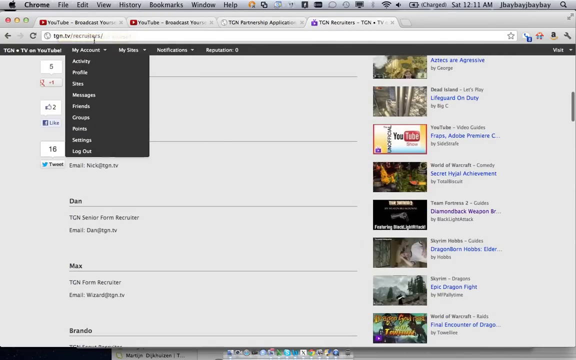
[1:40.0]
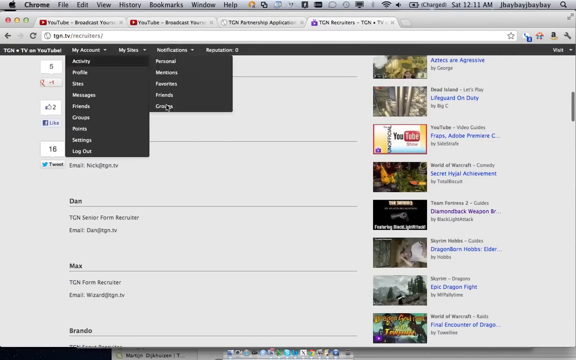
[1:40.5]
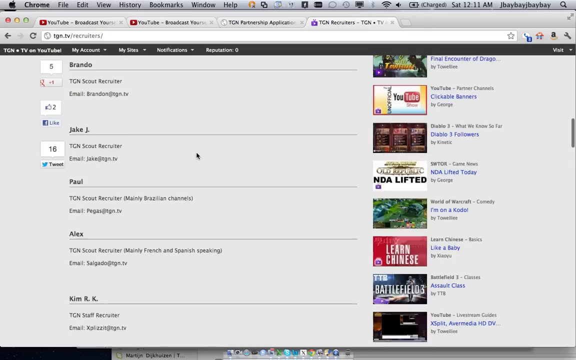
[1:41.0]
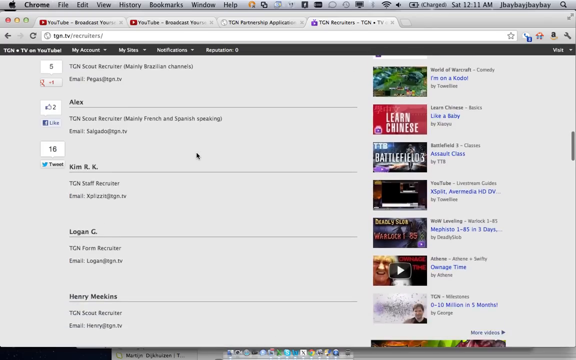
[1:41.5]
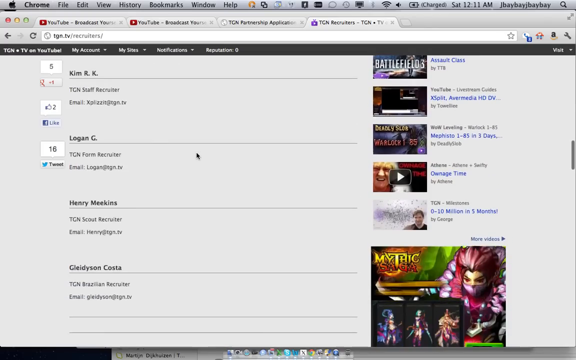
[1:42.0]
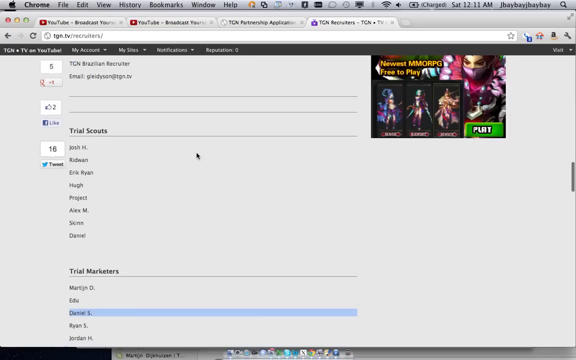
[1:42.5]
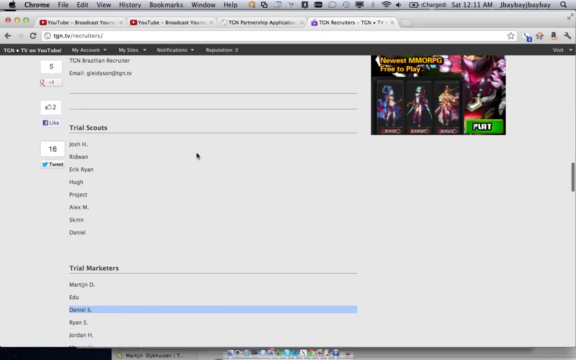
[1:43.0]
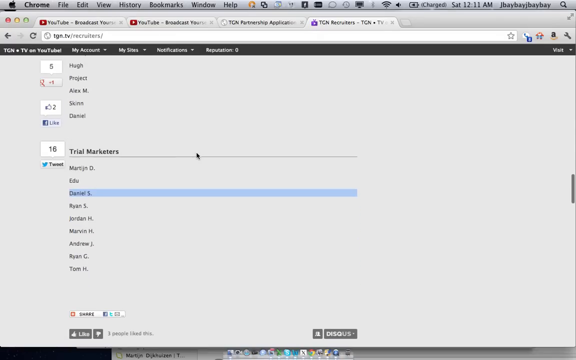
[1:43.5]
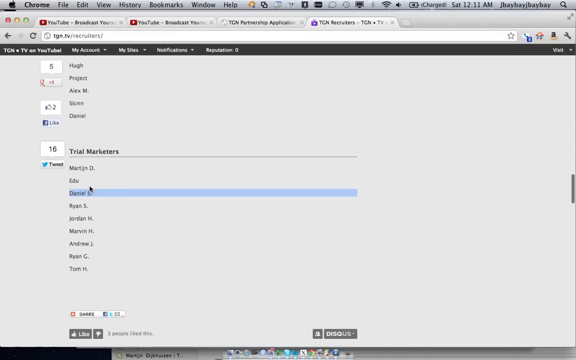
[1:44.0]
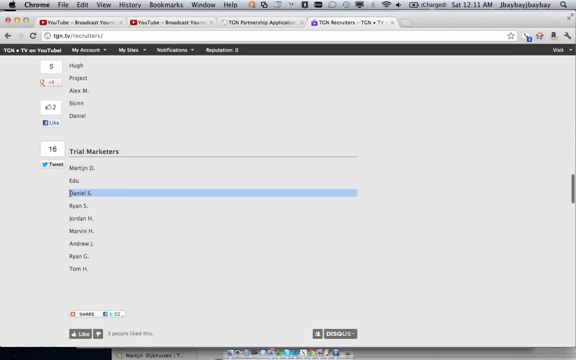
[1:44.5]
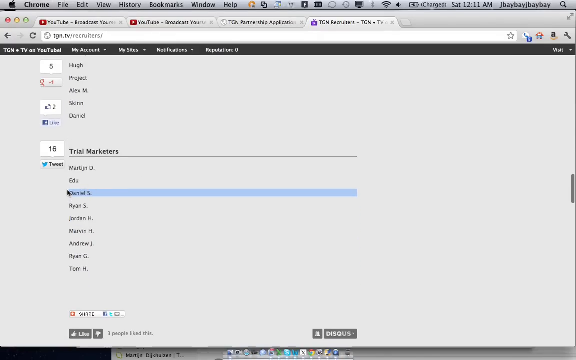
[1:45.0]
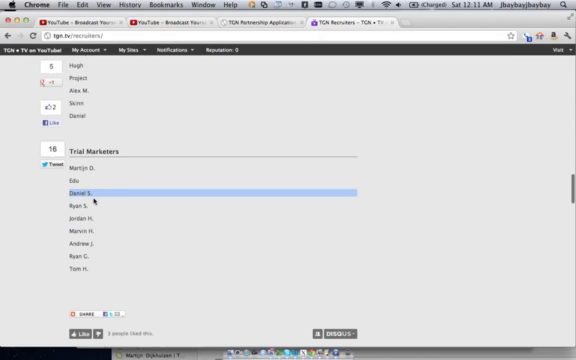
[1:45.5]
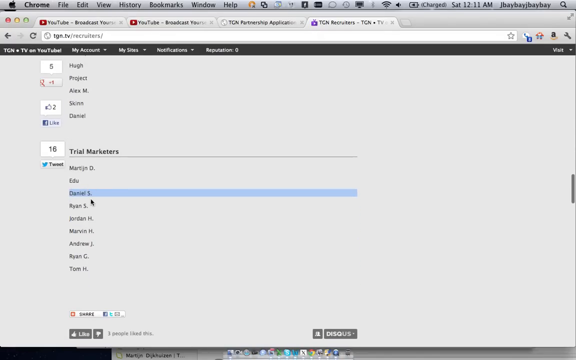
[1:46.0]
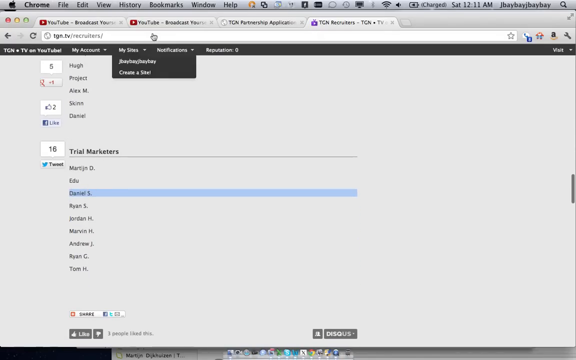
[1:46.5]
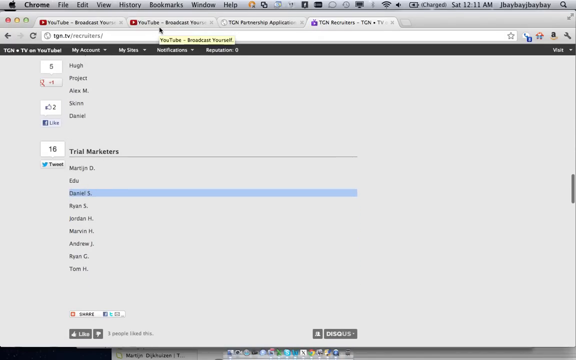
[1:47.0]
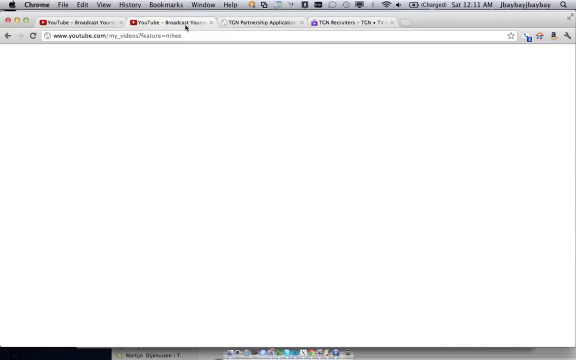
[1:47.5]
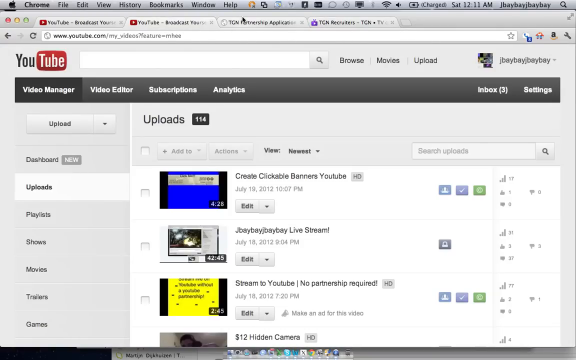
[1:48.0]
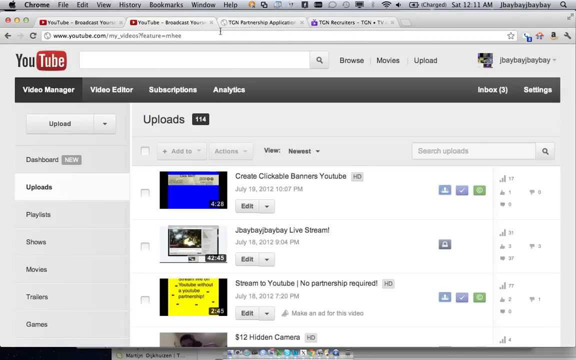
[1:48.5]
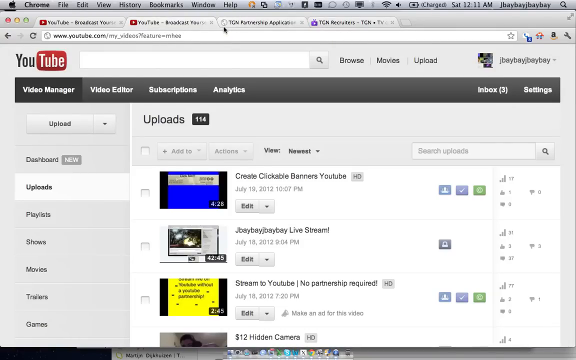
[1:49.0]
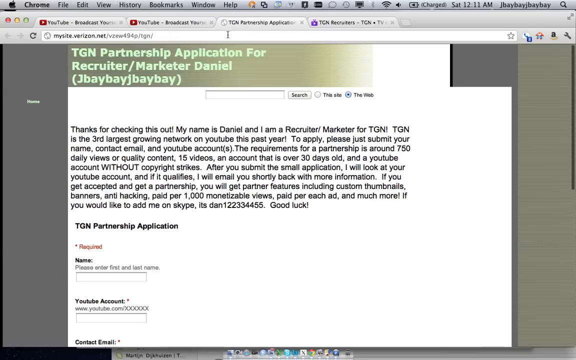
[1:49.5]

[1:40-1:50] The view scrolls through a number of videos and a list of trial marketers, where Daniel S is selected. The application is opened, then the TGN recruiters page again, and "My account" is clicked, dropping down a menu with my account, activity, profile, sites, messages, friends, groups, points, settings and log out, along with notifications and reputation. Several videos are on the right side of the screen, with titles including words such as "guard on duty", "Adobe Premiere", "achievement", "diamondback", "weapons", "dragonborn", "epic dragon fight" and "final encounter of dragon". The view scrolls through trial scouts, trial marketers and newest entries, with mention of a free-to-play video game of some sort, and Daniel S is highlighted as a trial marketer.